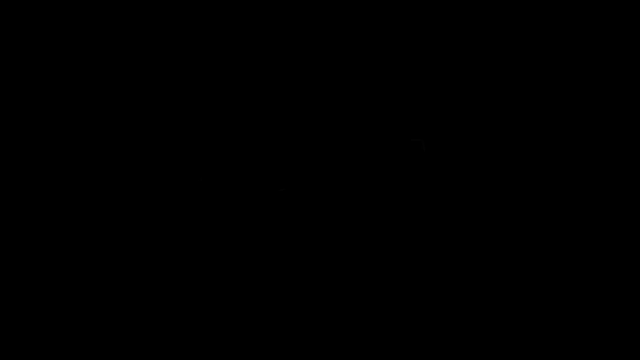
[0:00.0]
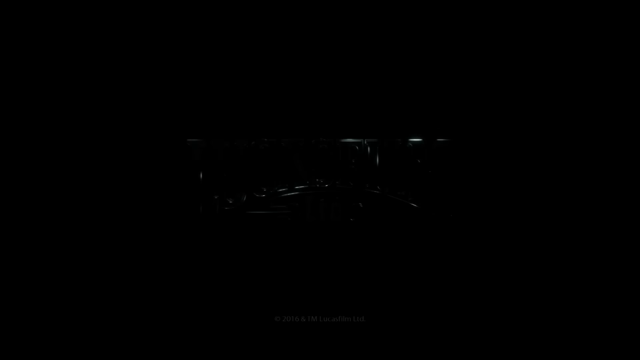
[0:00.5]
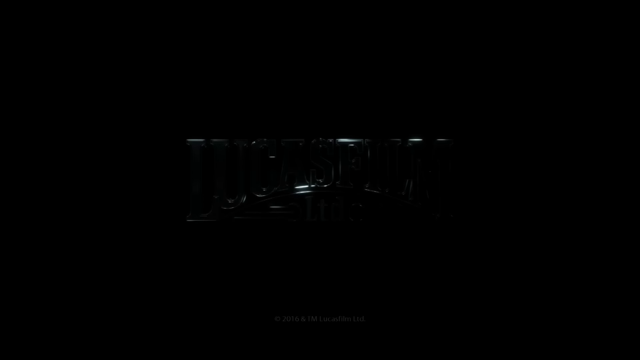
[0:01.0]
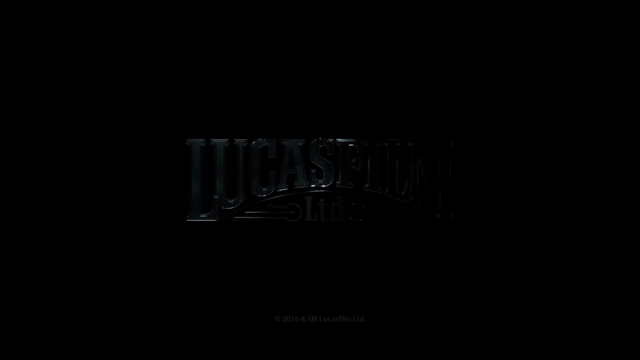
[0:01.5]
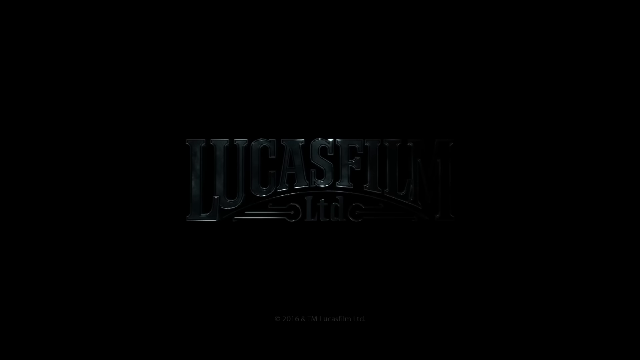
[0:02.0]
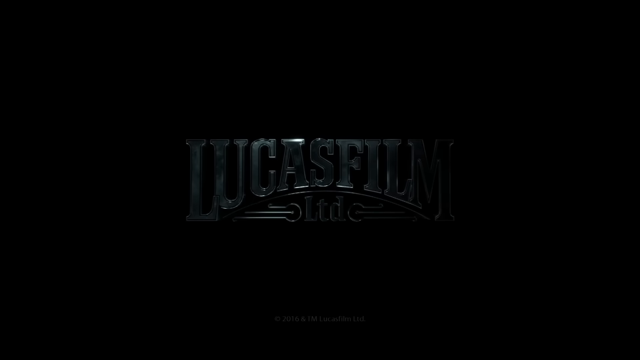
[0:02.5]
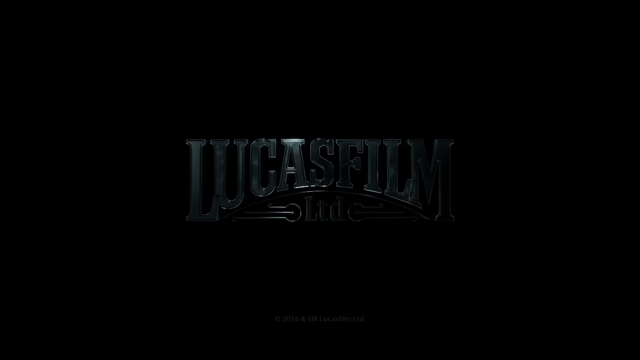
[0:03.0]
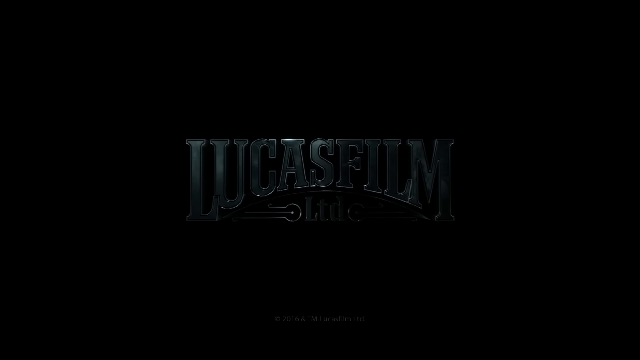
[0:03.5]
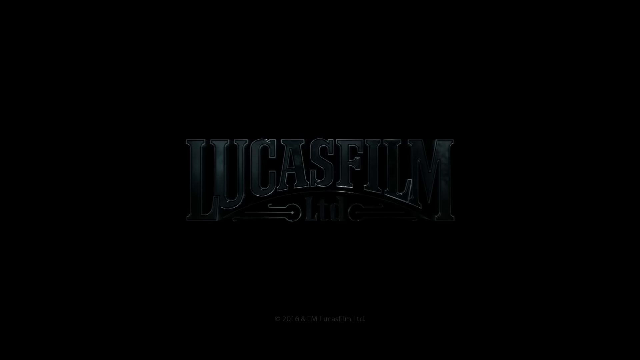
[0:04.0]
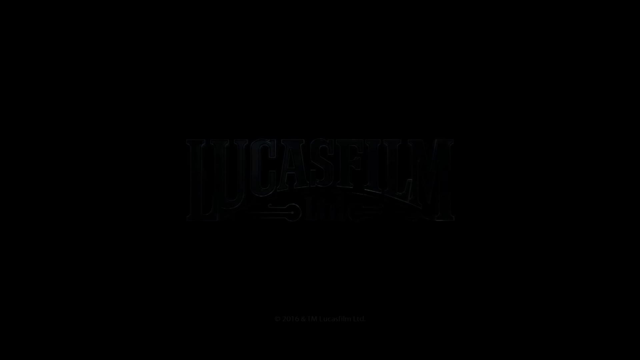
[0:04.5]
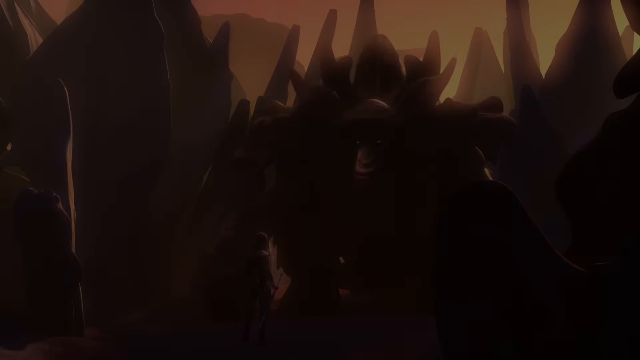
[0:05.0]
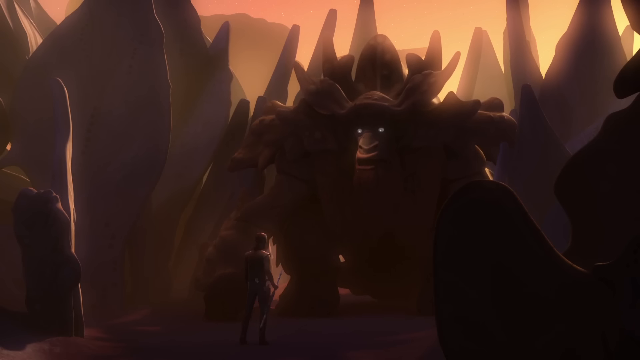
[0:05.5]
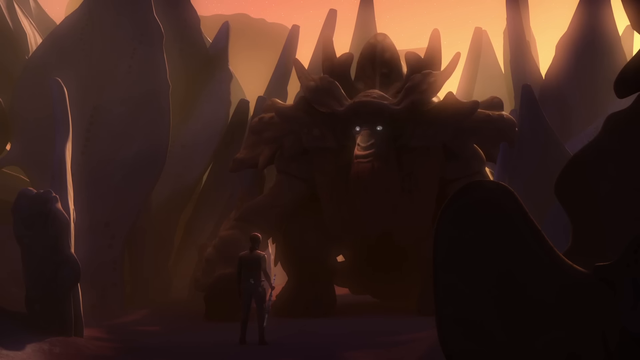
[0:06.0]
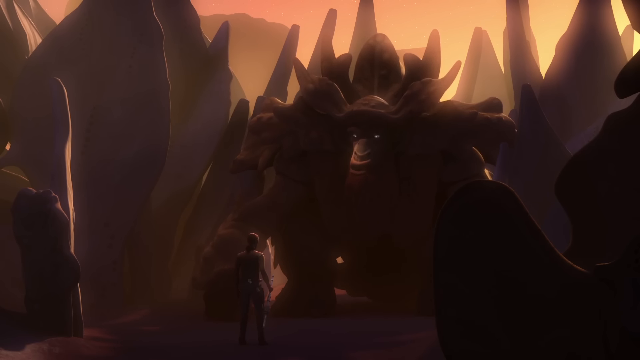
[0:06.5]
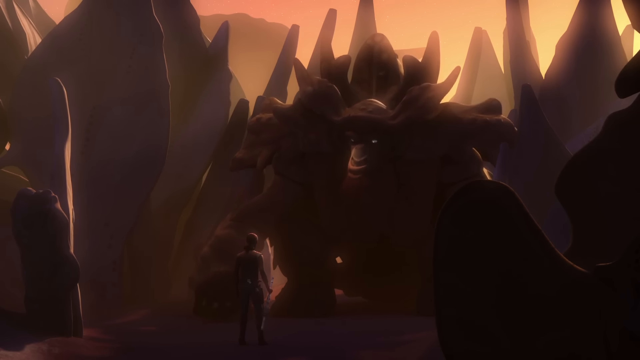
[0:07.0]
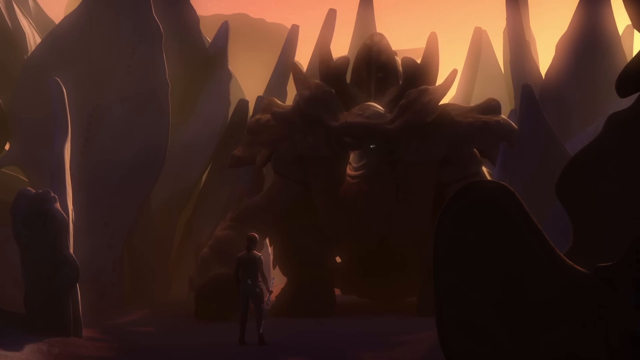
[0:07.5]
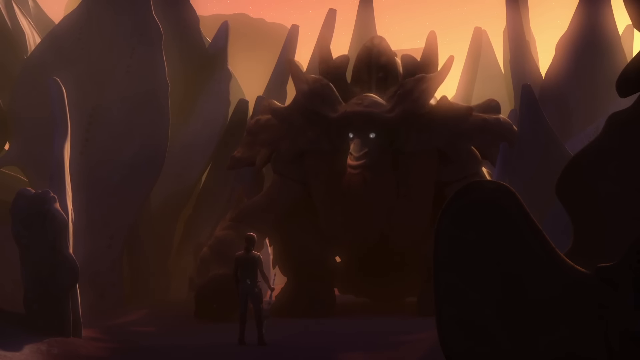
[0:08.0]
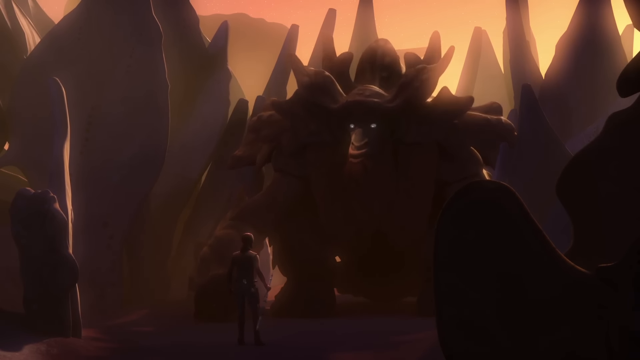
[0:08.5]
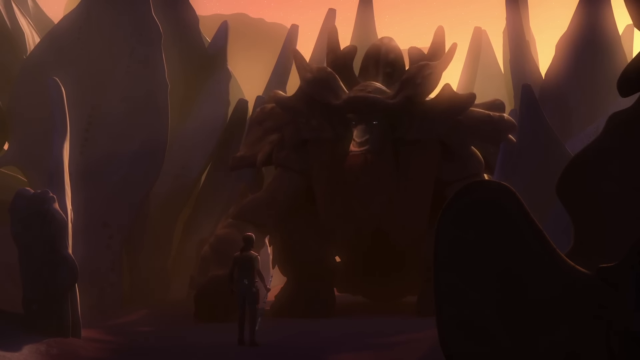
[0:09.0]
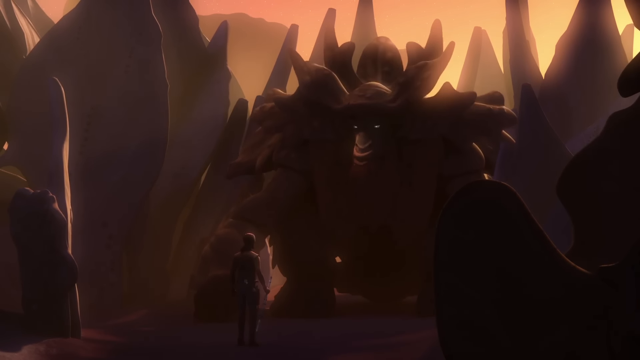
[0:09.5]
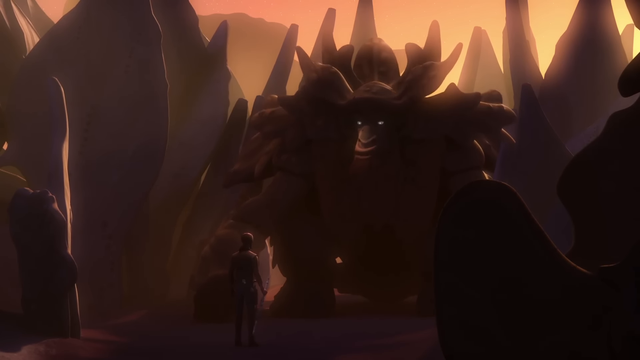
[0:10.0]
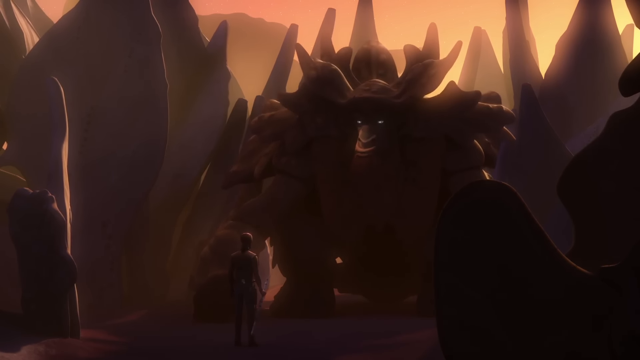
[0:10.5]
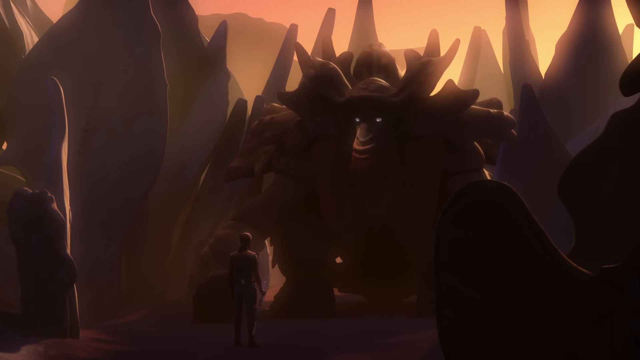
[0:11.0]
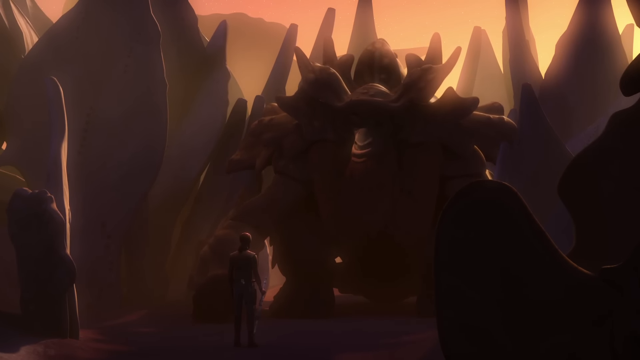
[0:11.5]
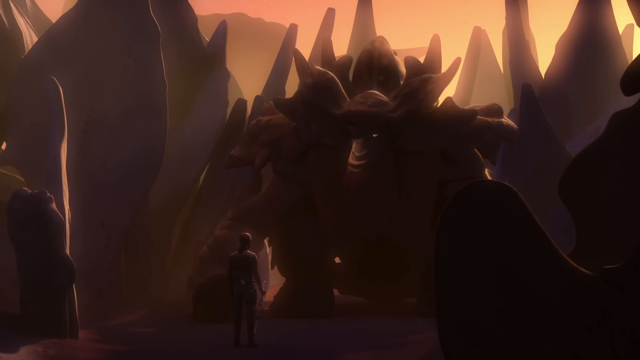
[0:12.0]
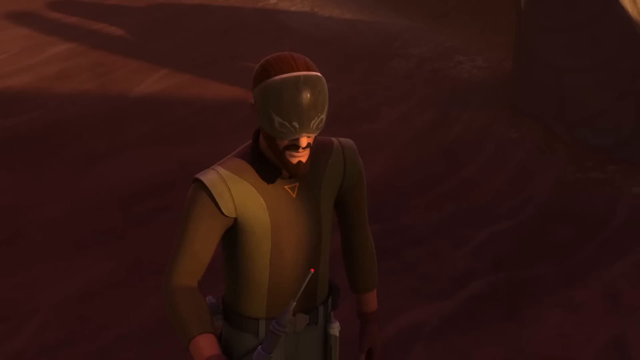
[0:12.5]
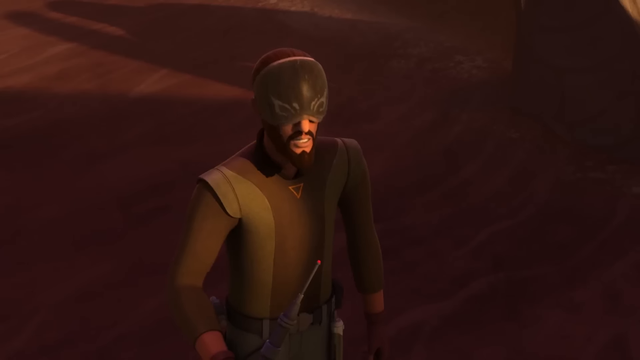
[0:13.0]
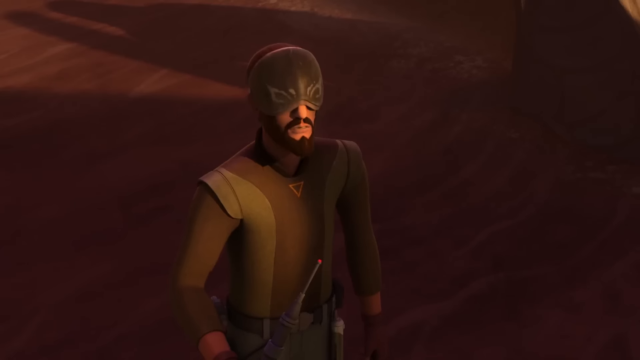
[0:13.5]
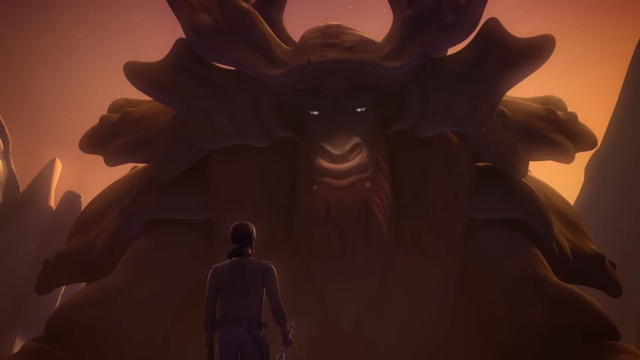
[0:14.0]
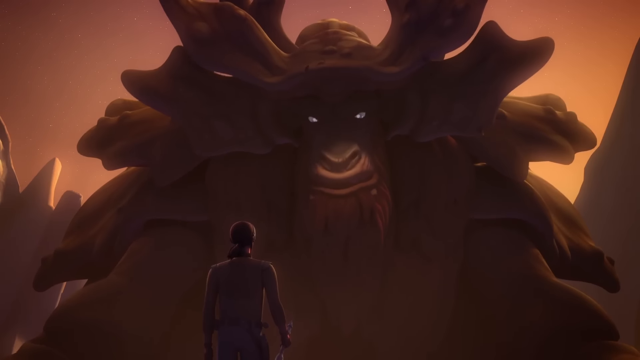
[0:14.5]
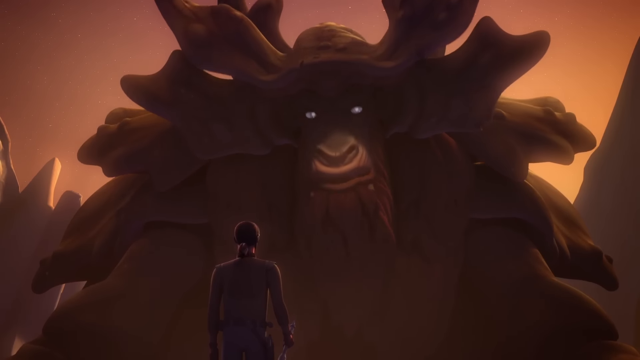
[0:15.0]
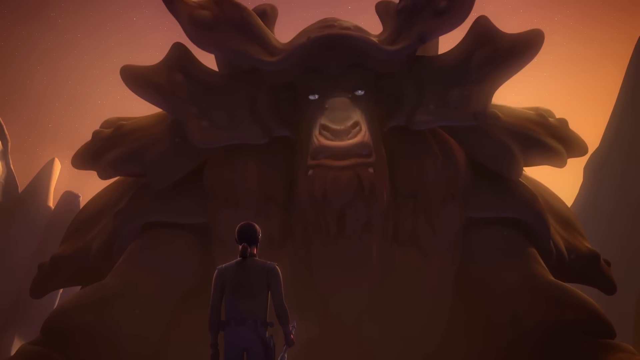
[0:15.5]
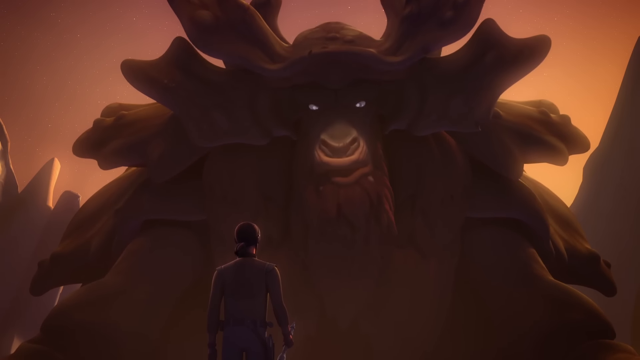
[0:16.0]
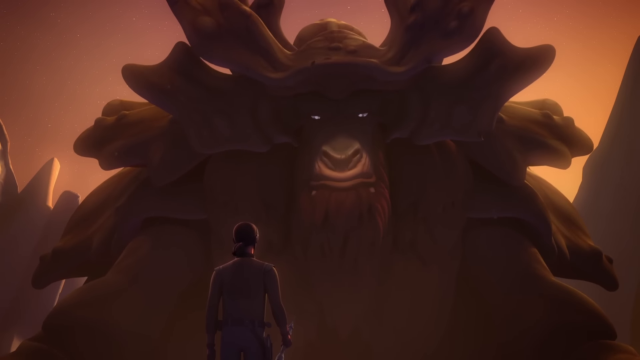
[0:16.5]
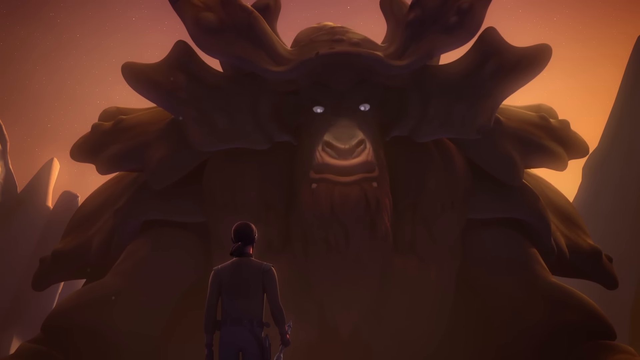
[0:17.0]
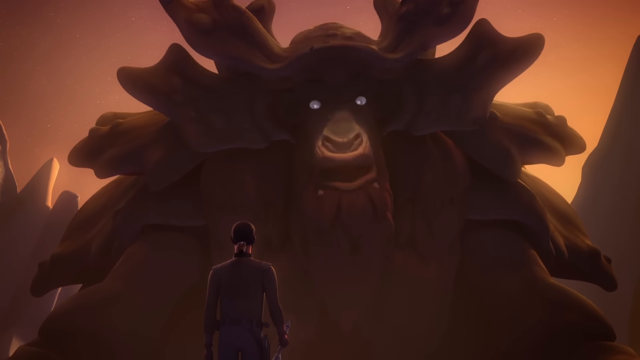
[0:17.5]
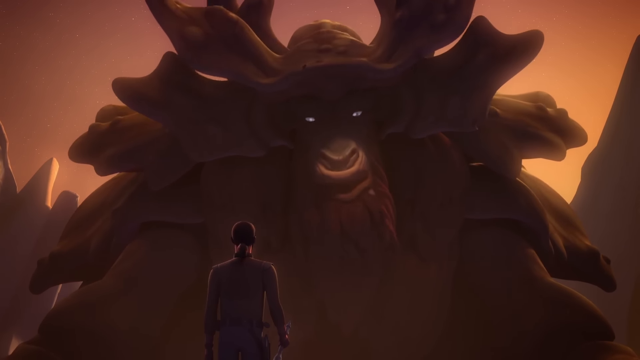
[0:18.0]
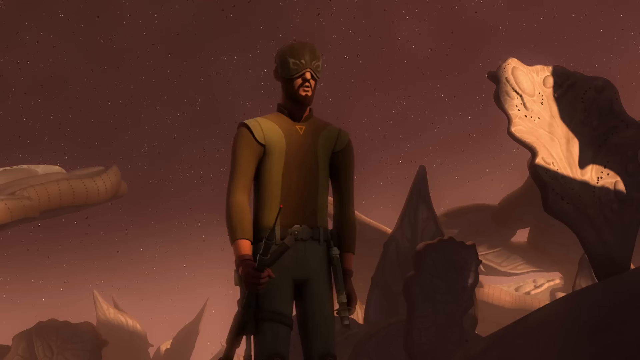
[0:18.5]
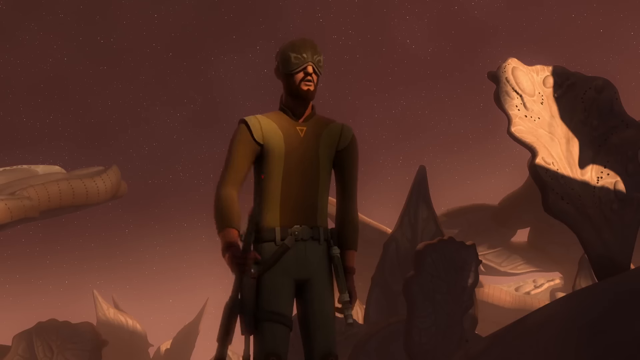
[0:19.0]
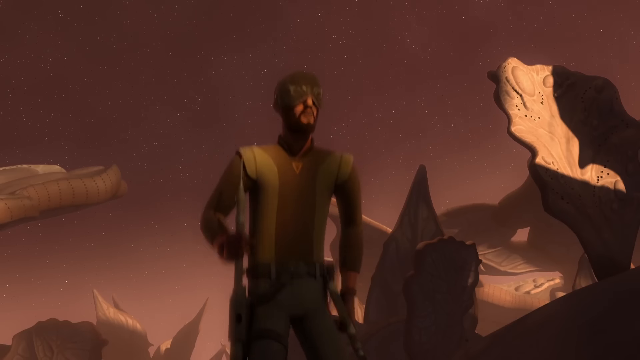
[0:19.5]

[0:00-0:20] The video opens on a solid black screen, and a swirling light gradually comes into focus with the text "LucasFilmsLTD" across the center. The image then changes to an animation in which a large monster stands in the middle of the frame. The monster does not look very aggressive and talks in a calm, gentle manner. A superhero in front of him kneels down on one knee, holding a weapon in his right hand, with his left knee up and his left hand touching it. In the background are what appear to be large seashells, stone designs, and patterns of various plants. The man kneels, and as he walks up to the monster, the scene changes.